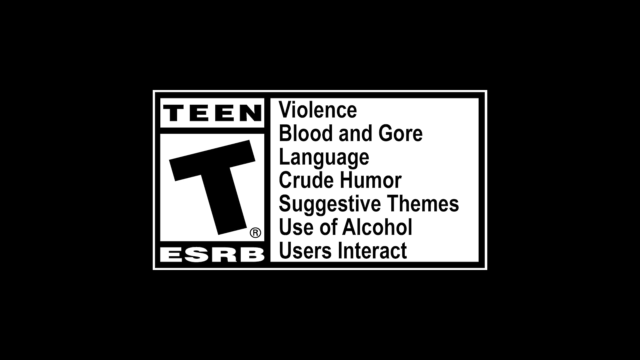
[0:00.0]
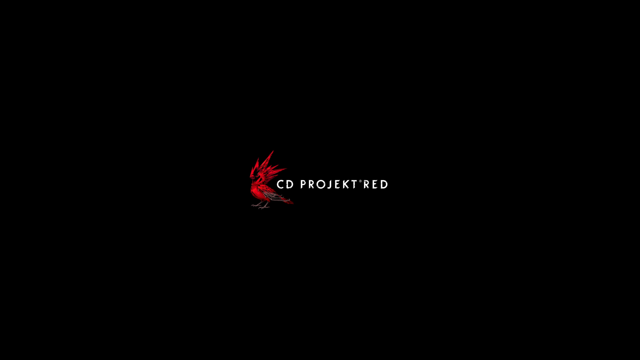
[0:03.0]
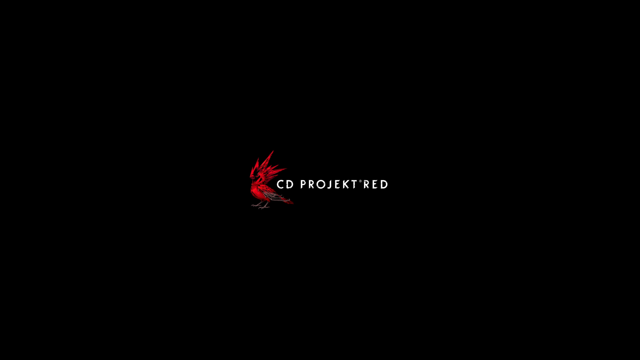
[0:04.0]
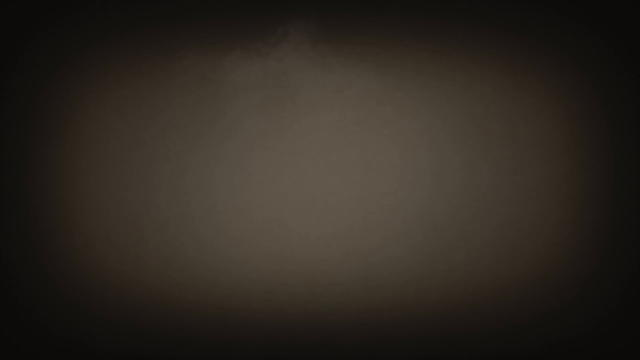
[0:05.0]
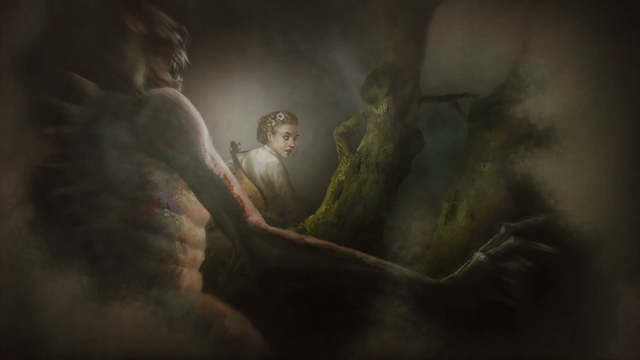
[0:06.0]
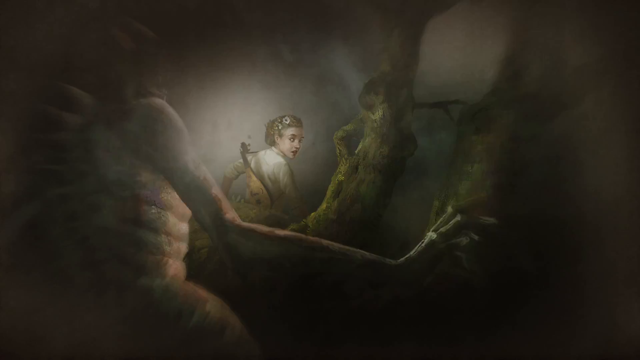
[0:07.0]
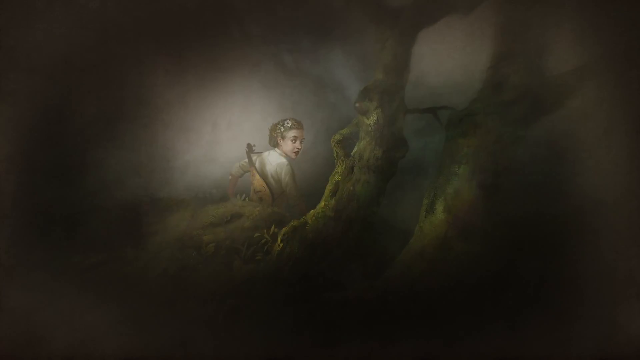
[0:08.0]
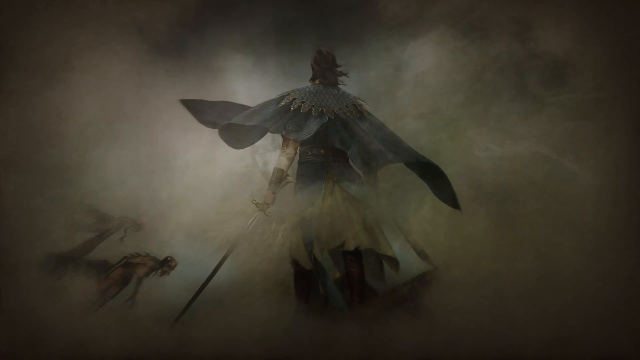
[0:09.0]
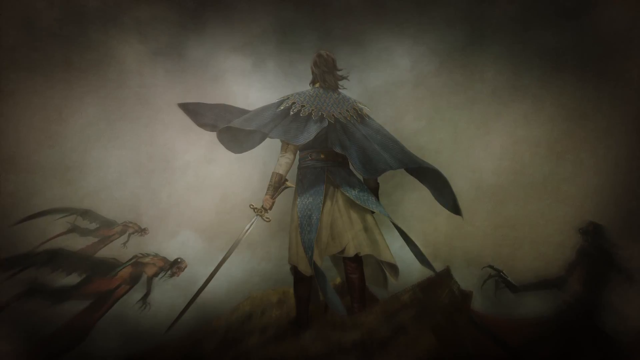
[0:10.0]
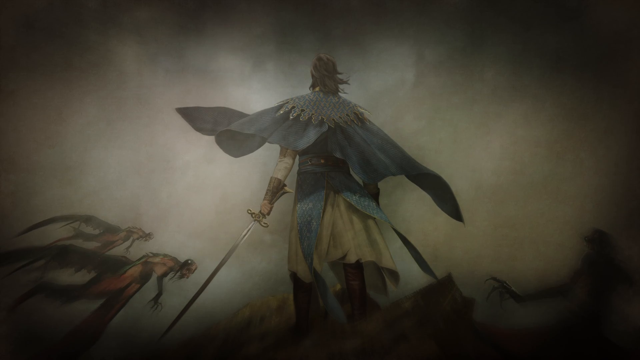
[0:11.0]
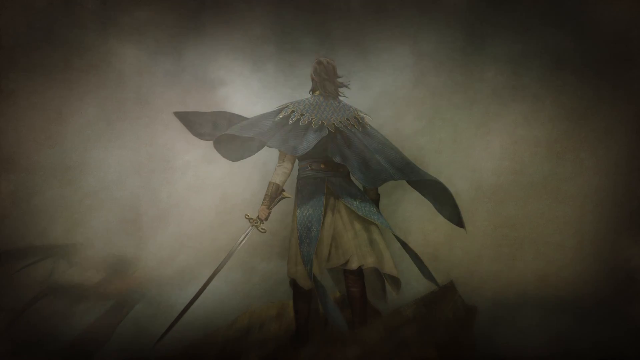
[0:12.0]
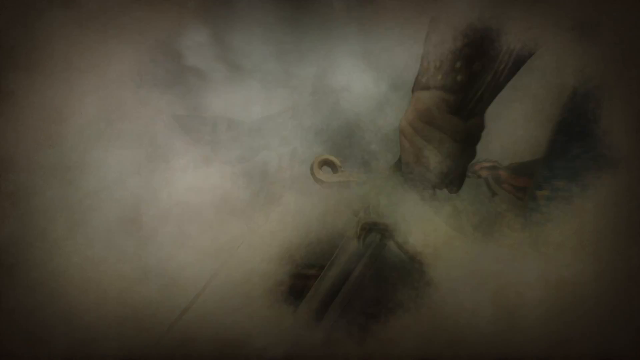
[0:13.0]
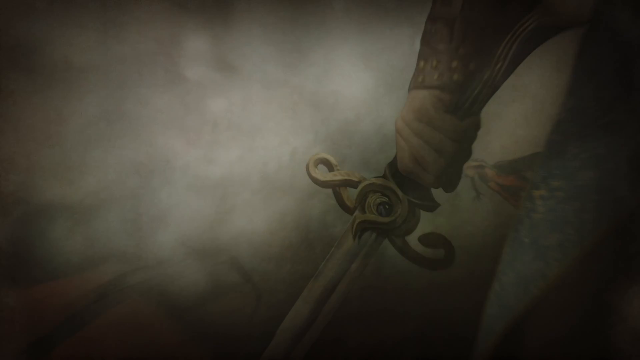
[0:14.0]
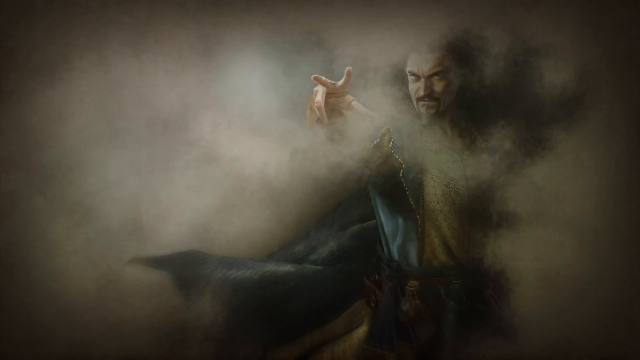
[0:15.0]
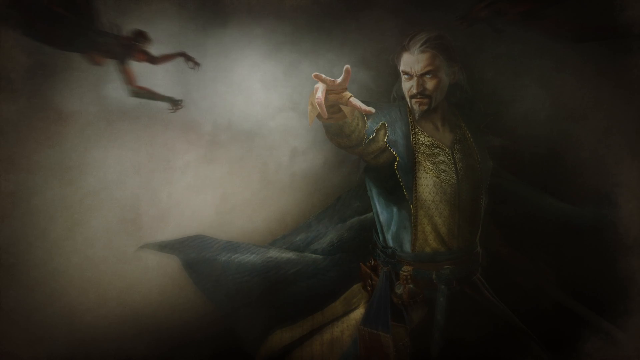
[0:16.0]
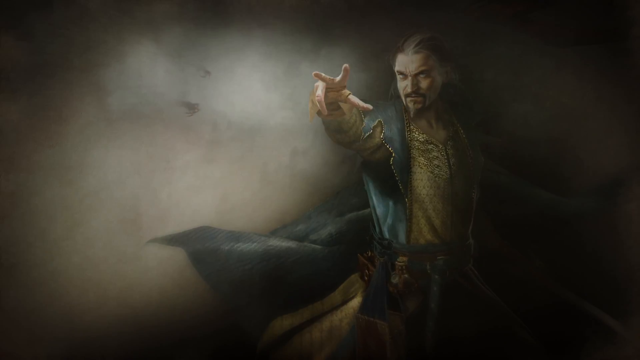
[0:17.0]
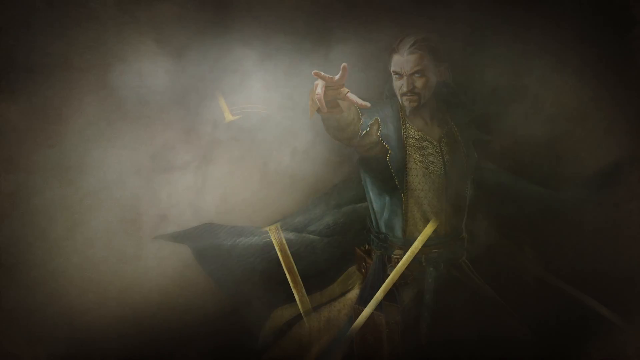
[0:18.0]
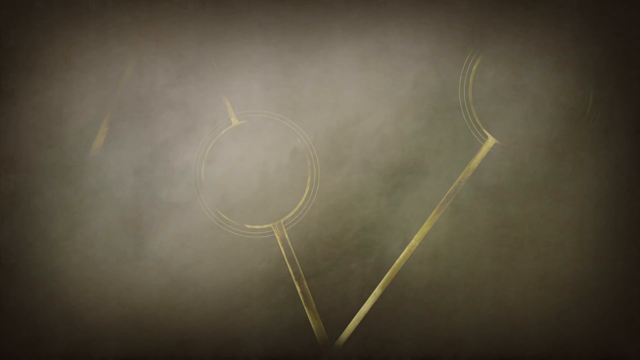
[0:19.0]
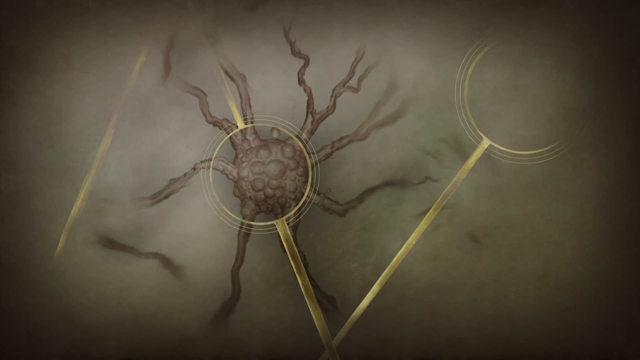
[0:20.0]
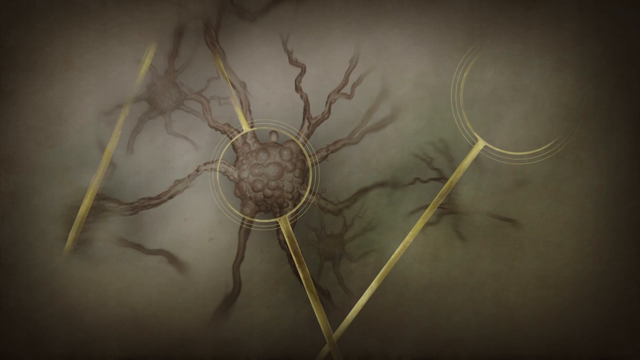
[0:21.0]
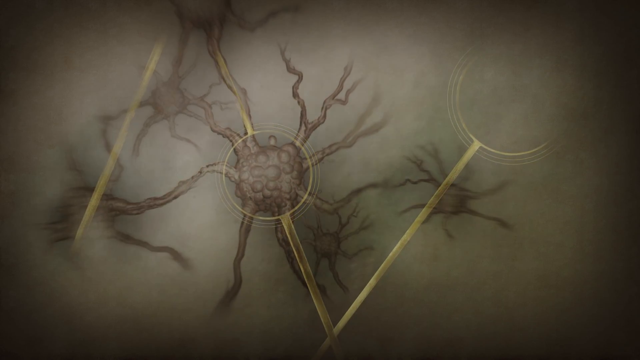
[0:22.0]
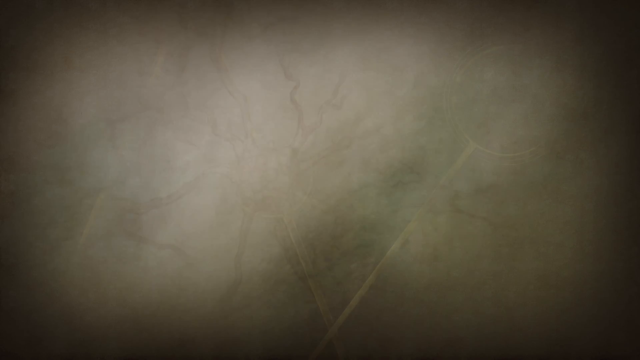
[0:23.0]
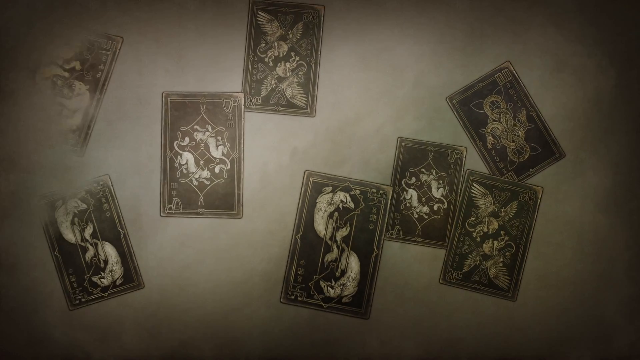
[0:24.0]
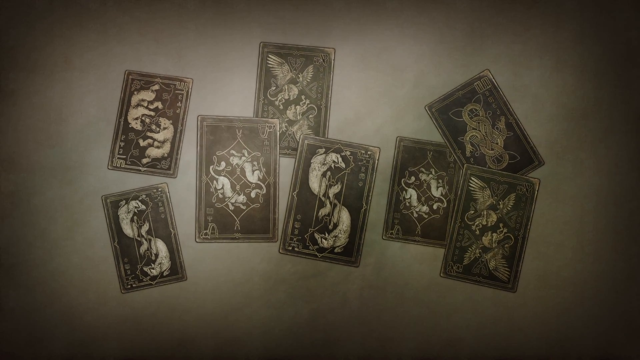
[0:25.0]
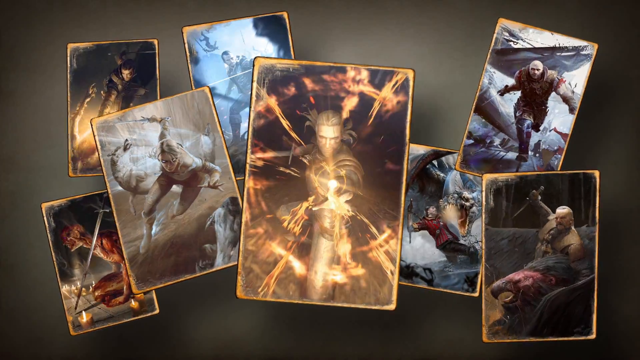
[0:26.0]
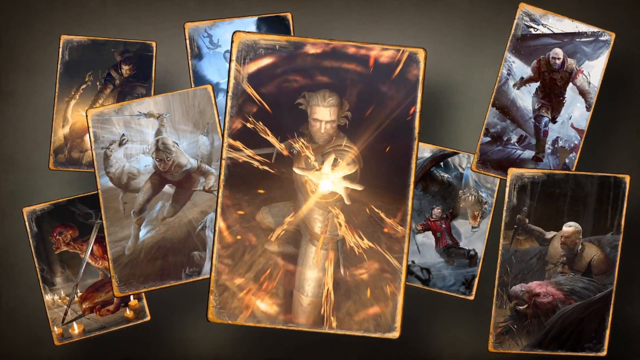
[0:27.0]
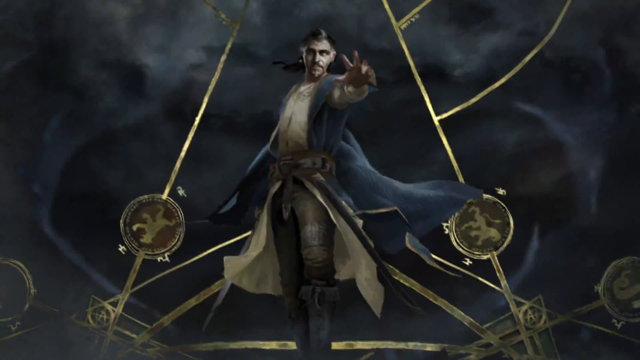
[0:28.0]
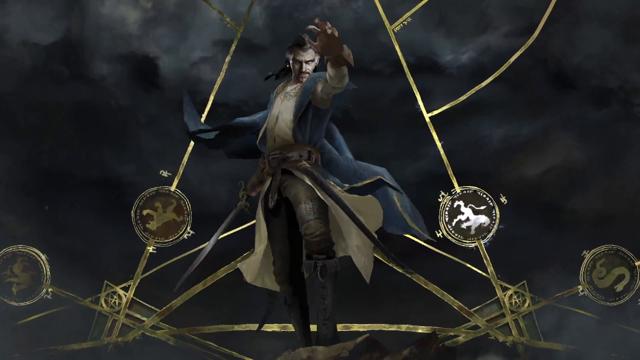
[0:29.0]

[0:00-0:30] The video opens as an introduction or trailer for a video game, with a rating of T for teen indicating that it contains violence, blood and gore, language, crude humor, suggestive themes, use of alcohol, and user interaction. Next, the studio that made the game, CD Projekt Red, is introduced. A dusty fog disappears from the screen, revealing a mythical creature chasing a young girl through a dark, misty forest. The scene transitions to a still image of a man wearing a cape and wielding a sword as lightning flashes from the sky. Surrounding him are many goblin-like creatures, some with wings. A close-up of his sword follows, and then a character appears with his hand extended as lightning flashes around him. Eight face-down cards appear on the screen, each bearing an image of an animal, such as a bear, a bird, a snake and more. The cards flip over to reveal images of characters from the game along with animations of them. The screen then bursts with light to reveal another character with his hand extended toward the camera as a symbol appears behind him.